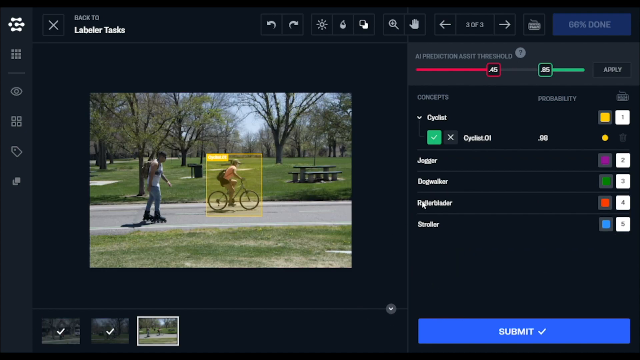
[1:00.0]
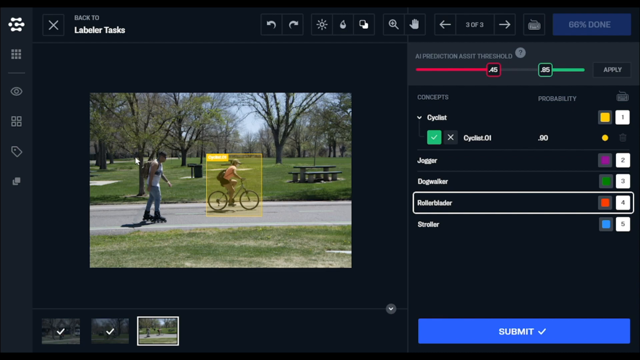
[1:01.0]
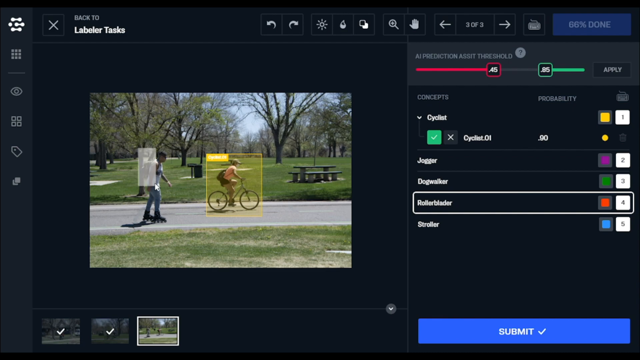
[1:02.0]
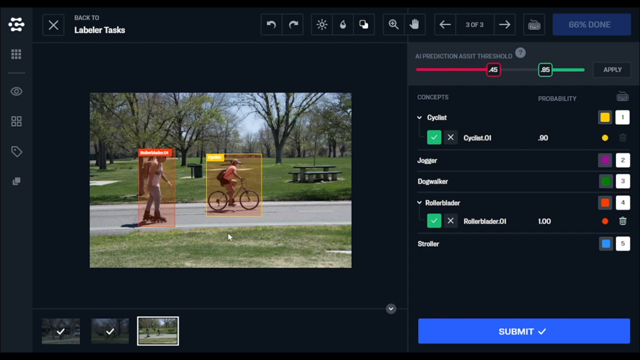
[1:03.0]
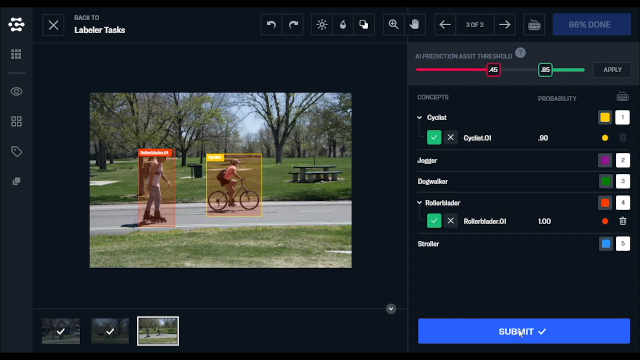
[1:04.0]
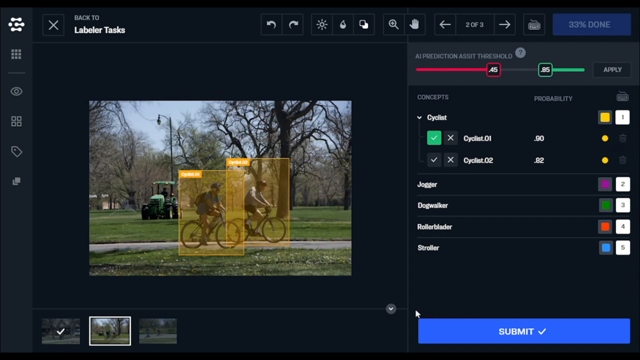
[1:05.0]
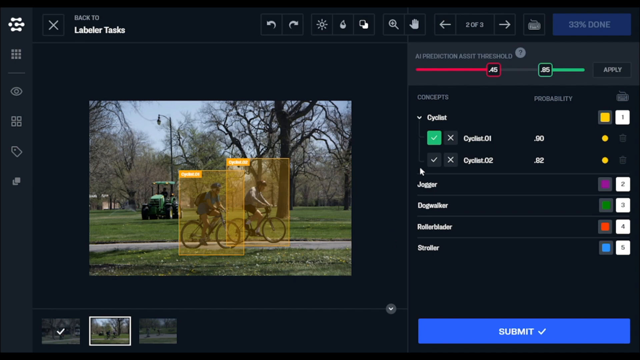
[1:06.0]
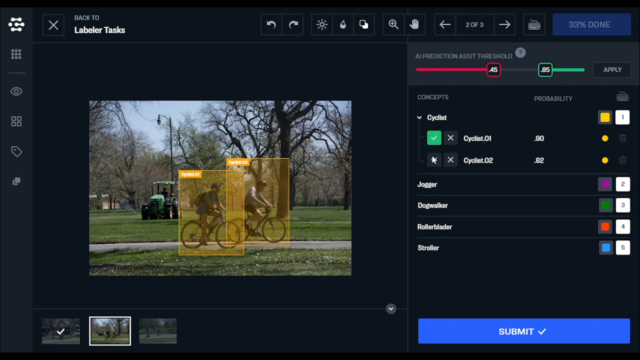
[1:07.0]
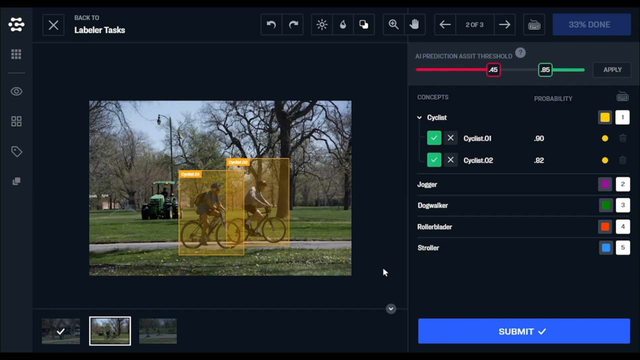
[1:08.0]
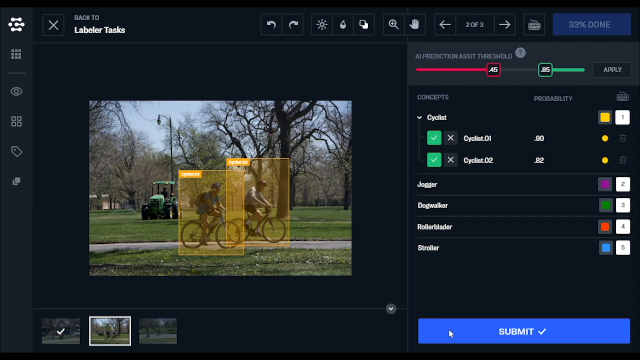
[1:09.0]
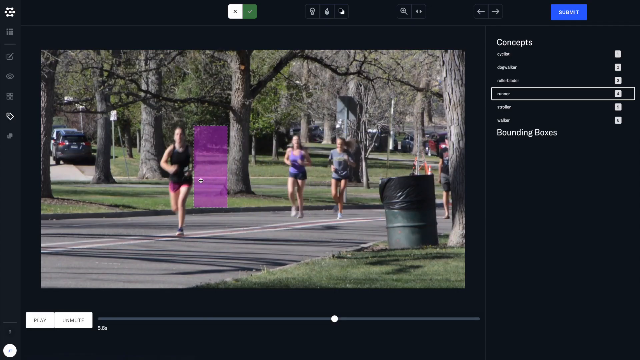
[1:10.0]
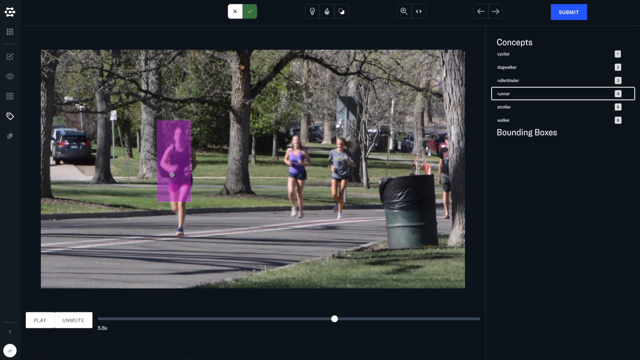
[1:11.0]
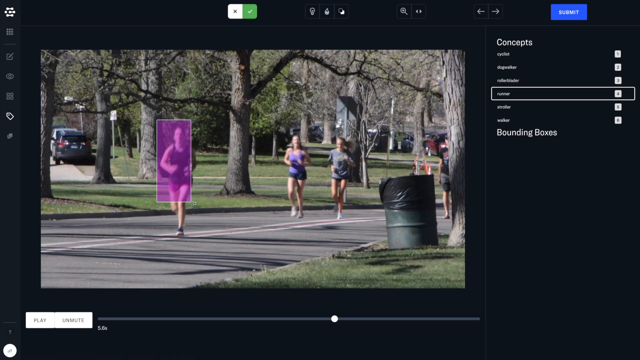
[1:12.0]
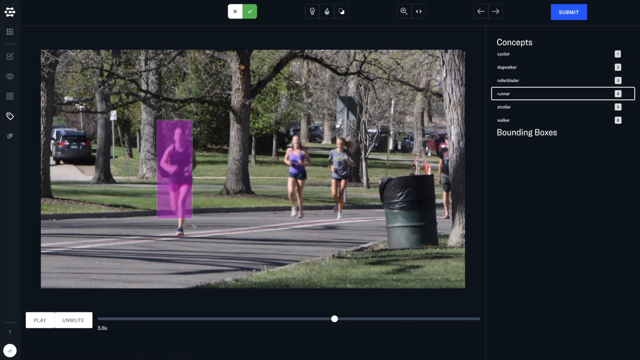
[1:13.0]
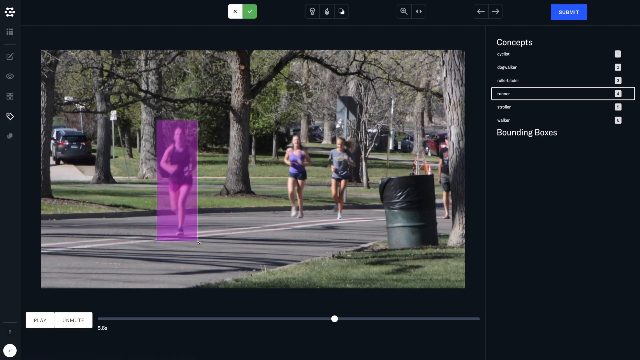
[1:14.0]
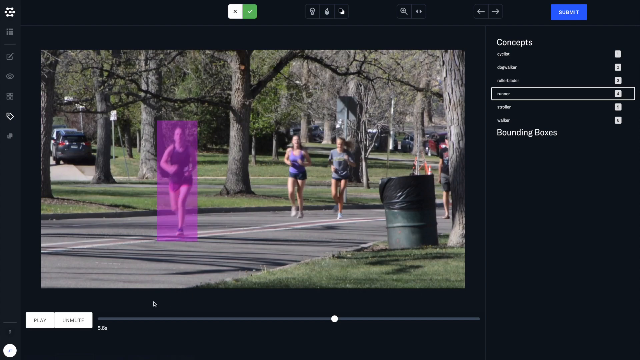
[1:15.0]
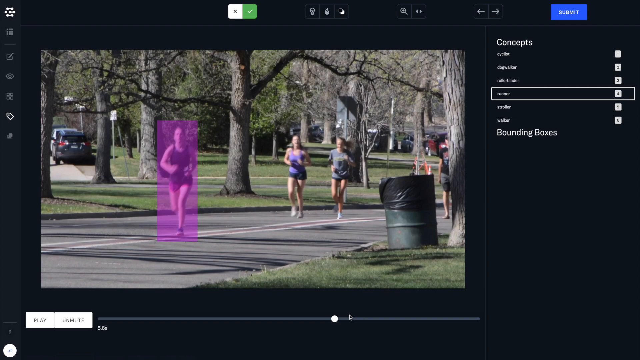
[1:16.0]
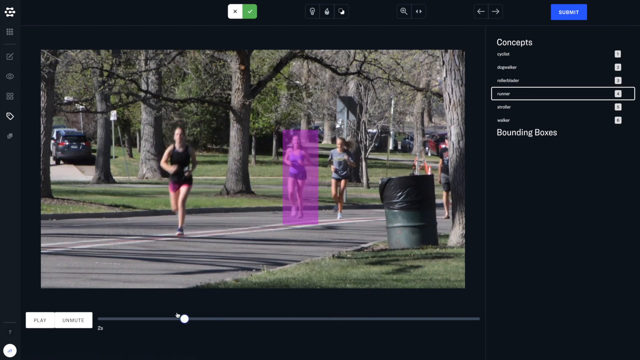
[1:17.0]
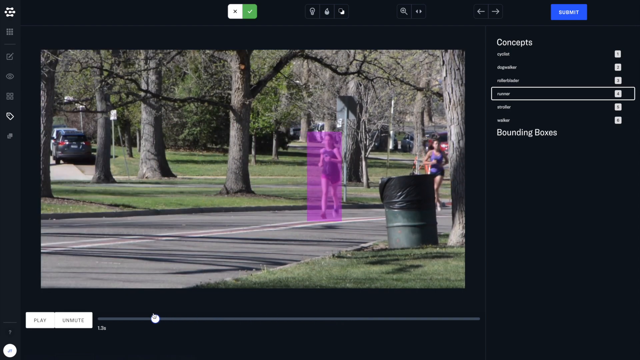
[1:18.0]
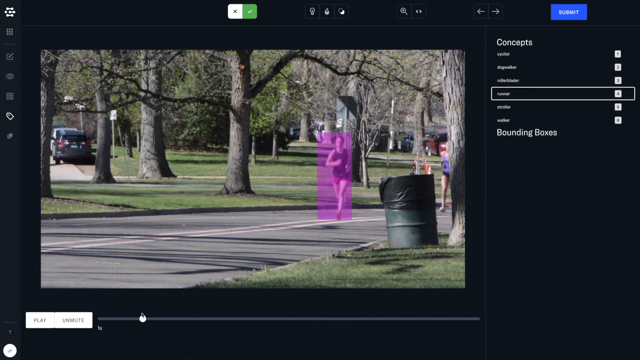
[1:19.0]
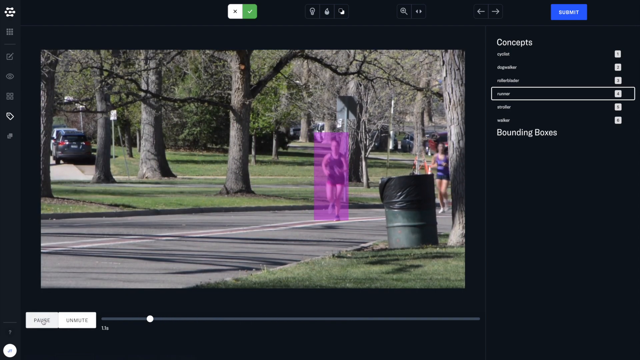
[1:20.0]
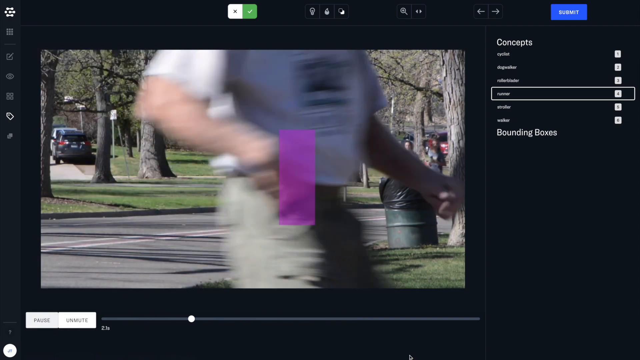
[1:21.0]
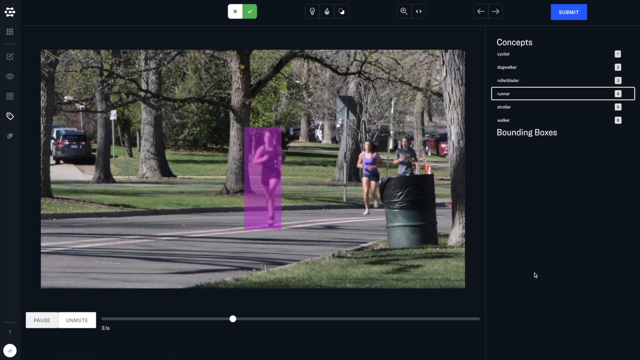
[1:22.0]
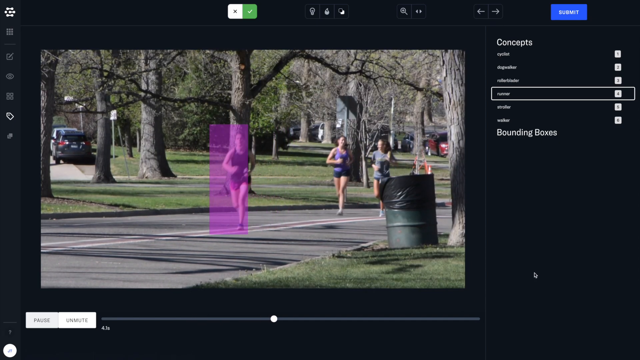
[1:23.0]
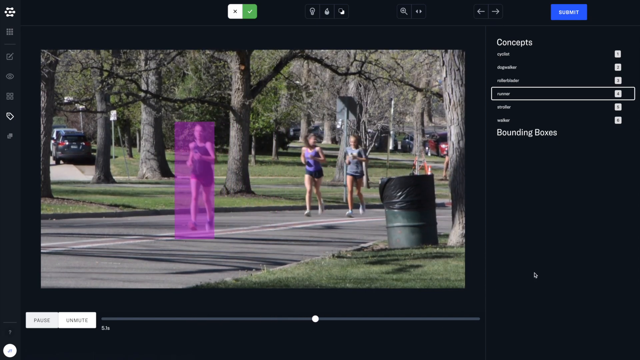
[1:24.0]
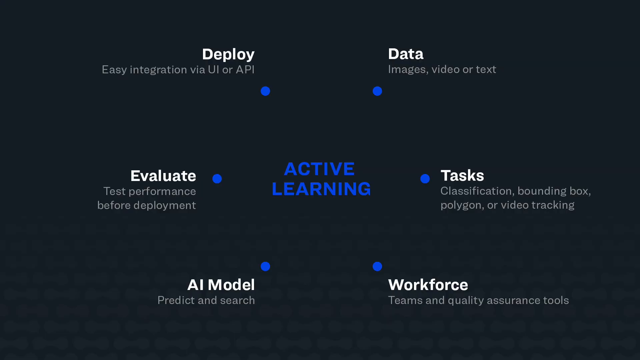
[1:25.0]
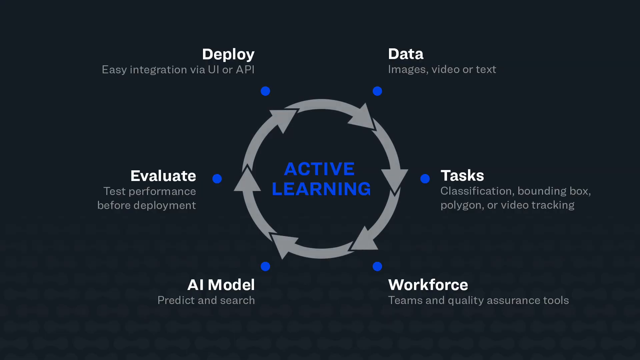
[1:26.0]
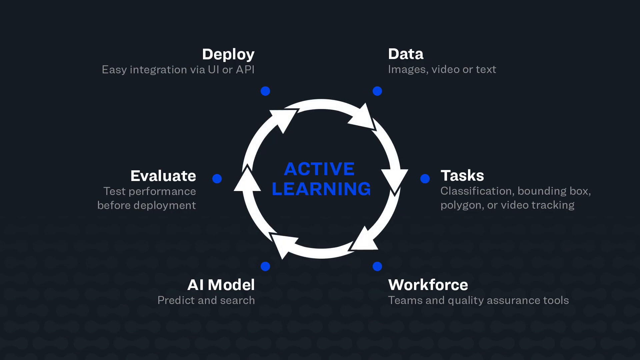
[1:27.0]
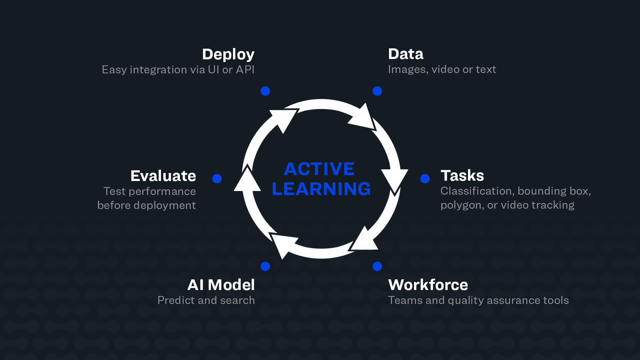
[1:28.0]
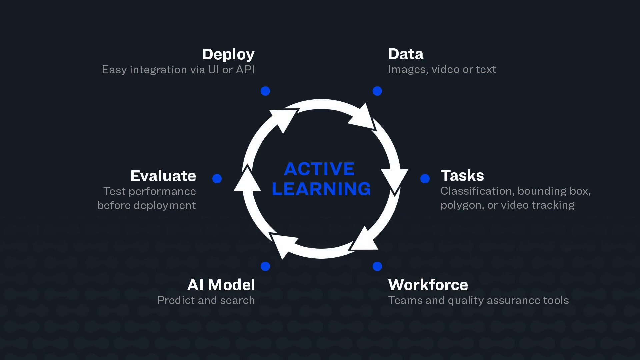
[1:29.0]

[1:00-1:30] The labeller tasks software shows a park picture in which a yellow label has been put around the female cyclist. The mouse moves around the picture and drags another box, in red, over the person on skates, then clicks submit. Another image follows with two people on bikes, each labeled in yellow; the mouse moves to the description "cyclist two" and clicks it, then clicks the Submit button. Next, a runner in the park has a purple box around her. The mouse highlights the box and drags it further down to her feet so she is fully covered. It then goes to a bar at the bottom of the screen and drags it to the left, so the purple box moves to the right and the runner originally highlighted in purple moves back down the road: instead of being level with the bin, she is now behind the bin, and the other runners are moved further back. The mouse presses play and she runs forwards. Then a screen with a black background and several dots appears. The first blue dot reads "deploy easy integration via UI or API"; below it is "evaluate test performance before deployment", and below that "AI model predict and search". On the right-hand side are a dot for "data images video or text", a dot in the centre for "tasks classification bounding box polygon or video tracking", and finally a dot for "workforce teams and quality assurance tools". These are all grouped around the title "active learning" in blue, and a grey circular arrow goes around the title, showing their connection.